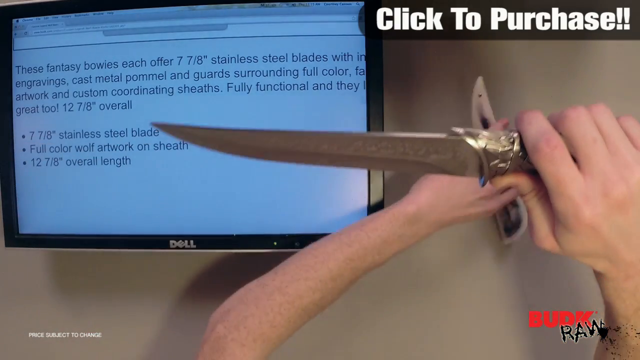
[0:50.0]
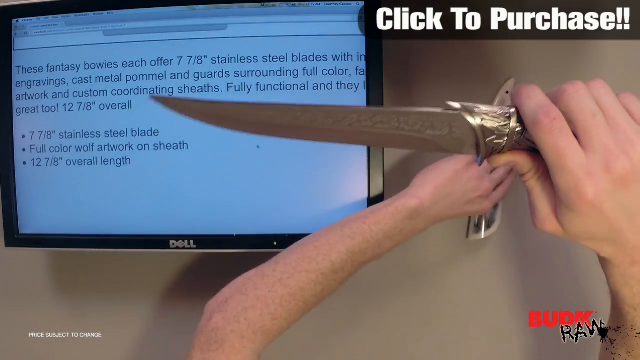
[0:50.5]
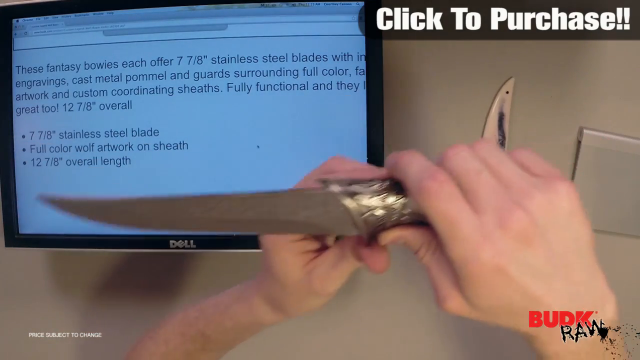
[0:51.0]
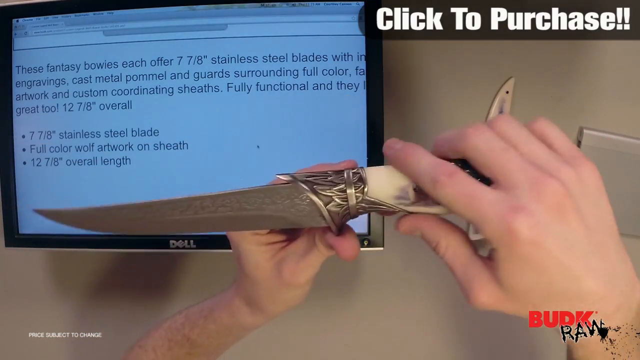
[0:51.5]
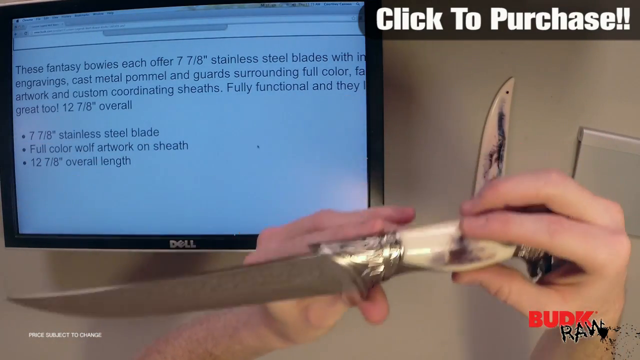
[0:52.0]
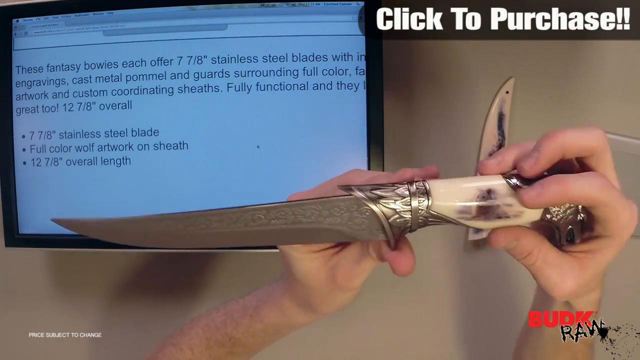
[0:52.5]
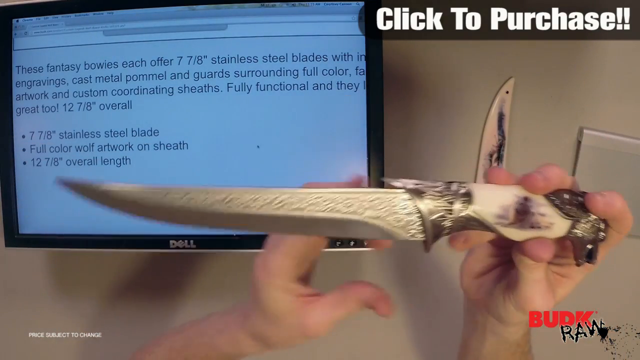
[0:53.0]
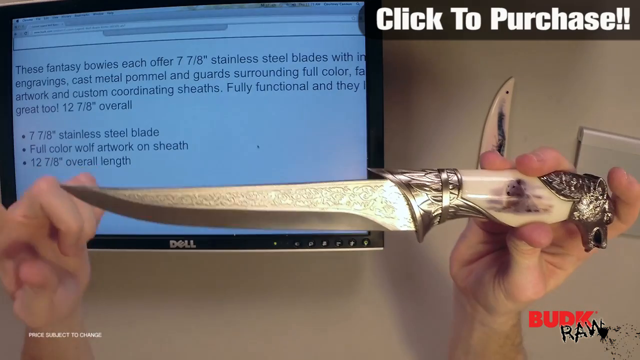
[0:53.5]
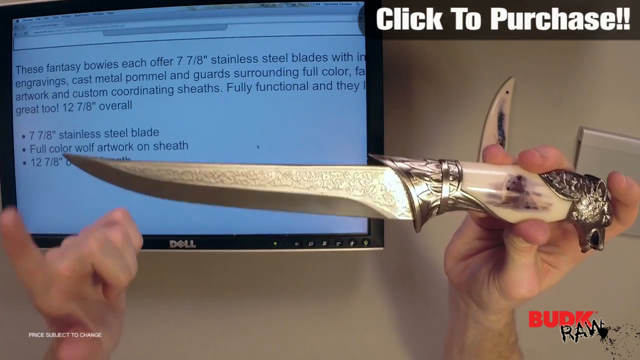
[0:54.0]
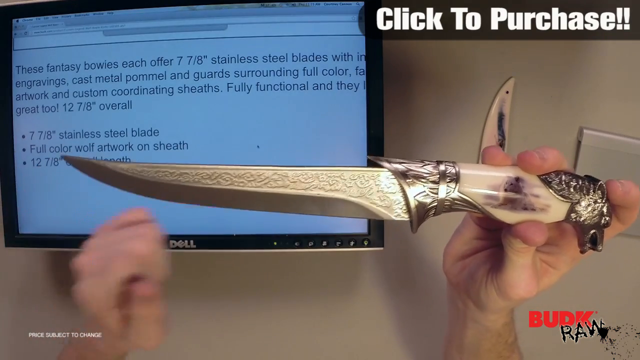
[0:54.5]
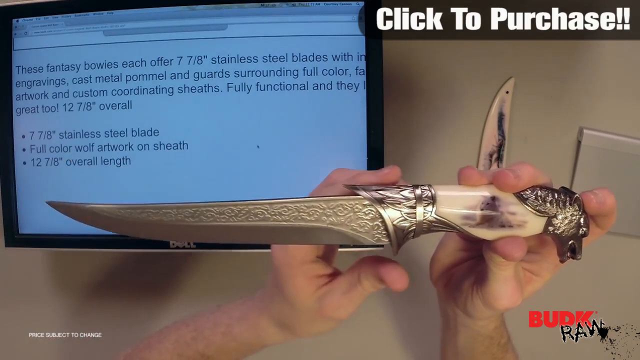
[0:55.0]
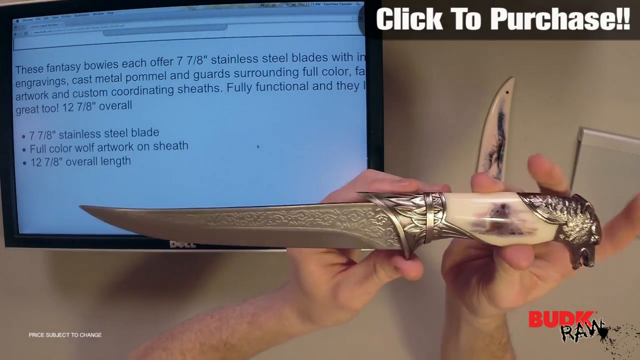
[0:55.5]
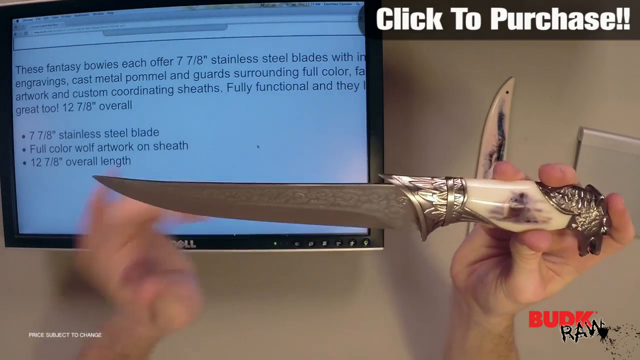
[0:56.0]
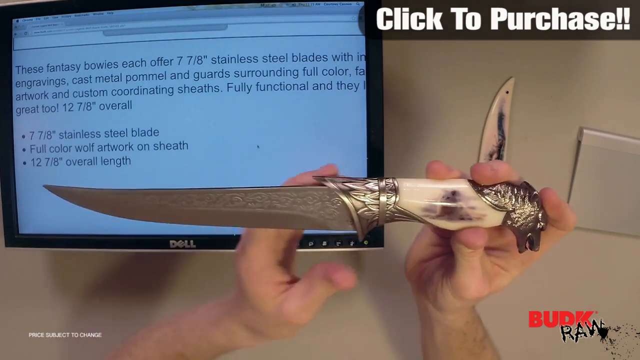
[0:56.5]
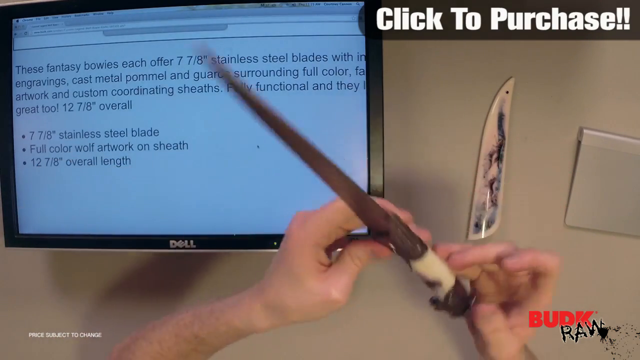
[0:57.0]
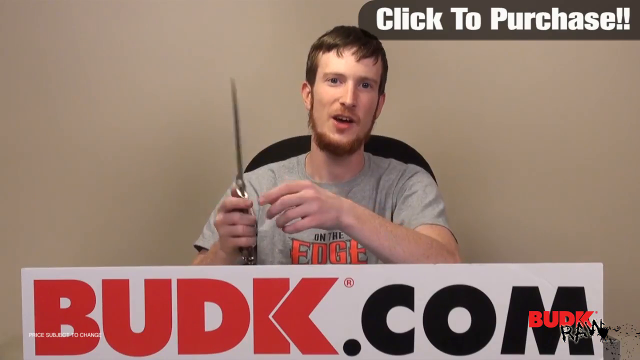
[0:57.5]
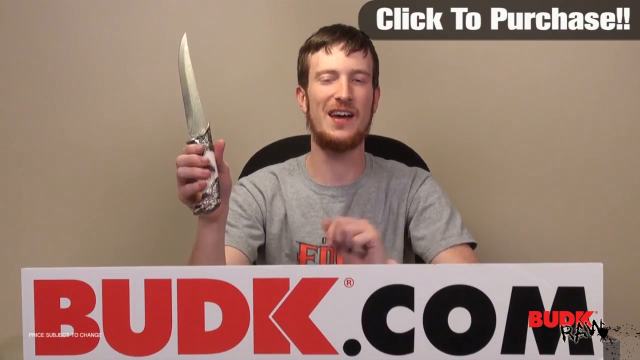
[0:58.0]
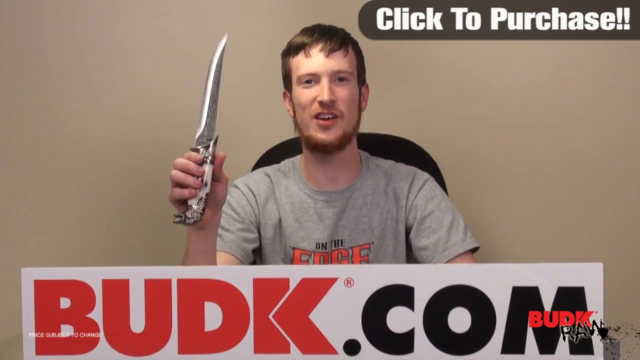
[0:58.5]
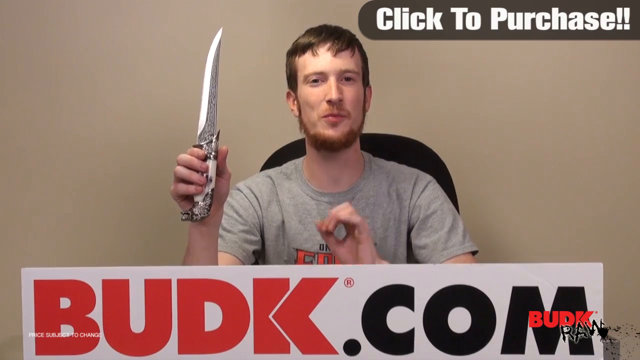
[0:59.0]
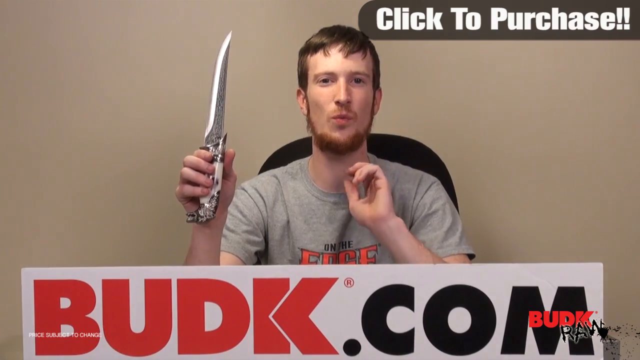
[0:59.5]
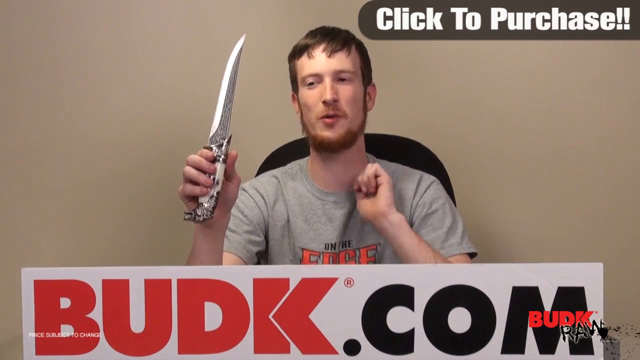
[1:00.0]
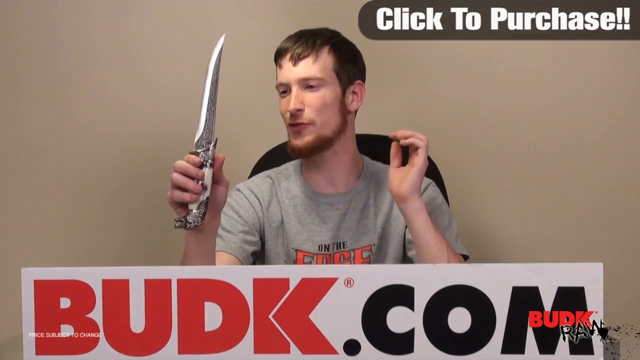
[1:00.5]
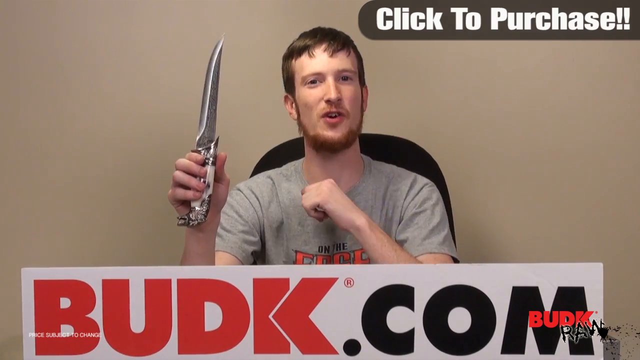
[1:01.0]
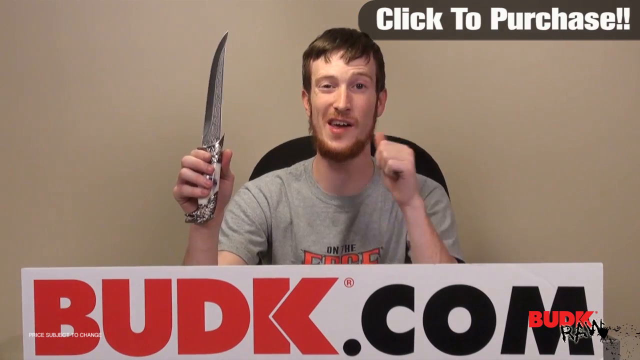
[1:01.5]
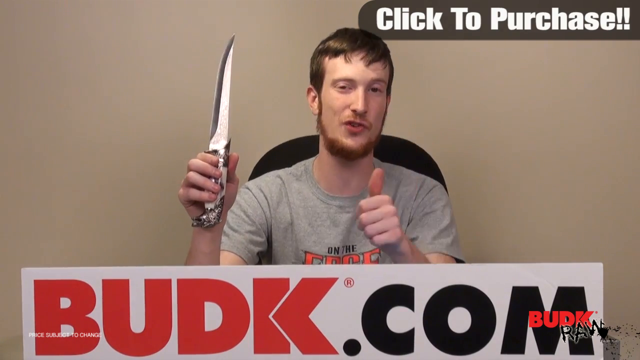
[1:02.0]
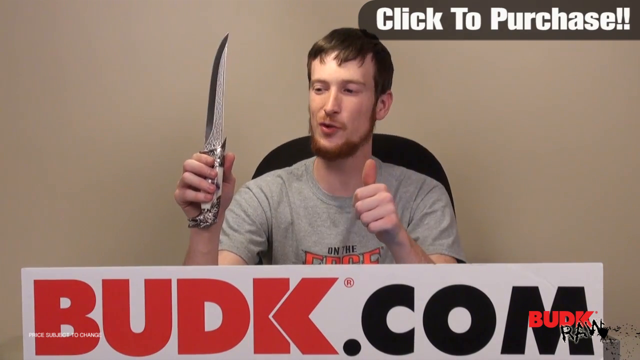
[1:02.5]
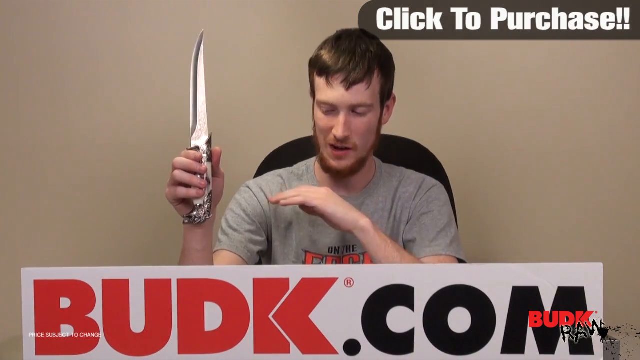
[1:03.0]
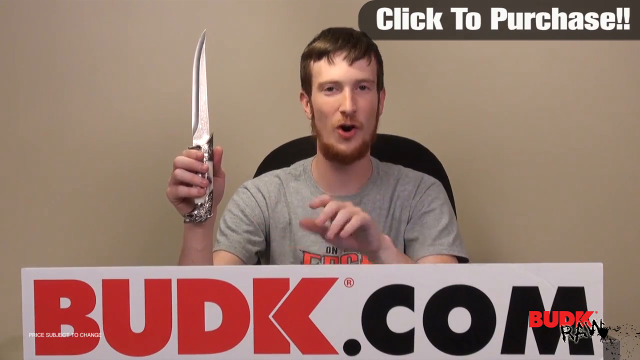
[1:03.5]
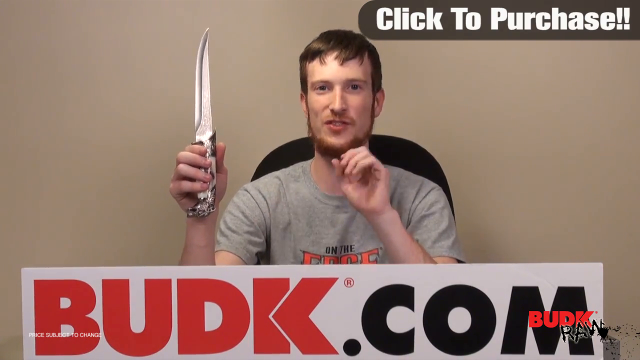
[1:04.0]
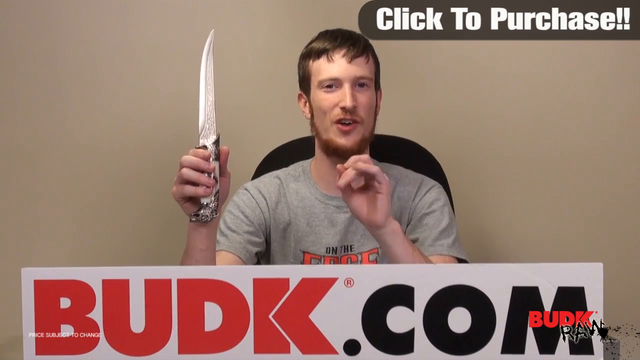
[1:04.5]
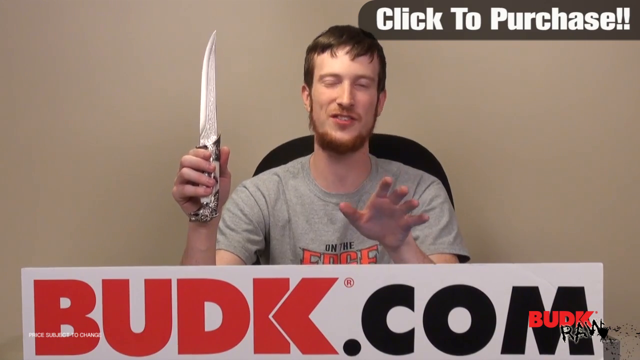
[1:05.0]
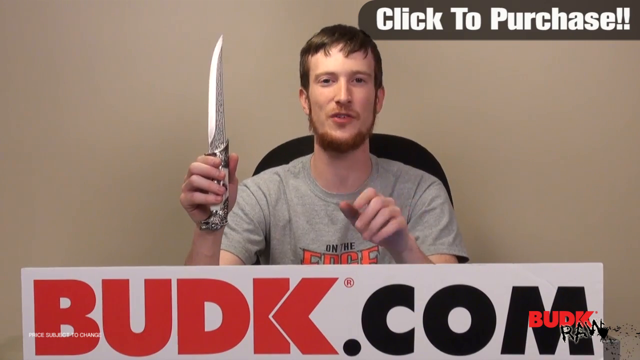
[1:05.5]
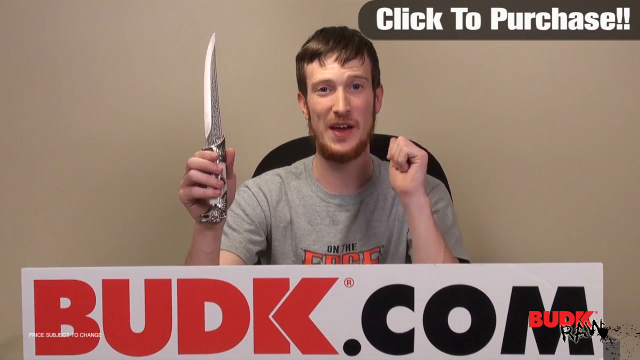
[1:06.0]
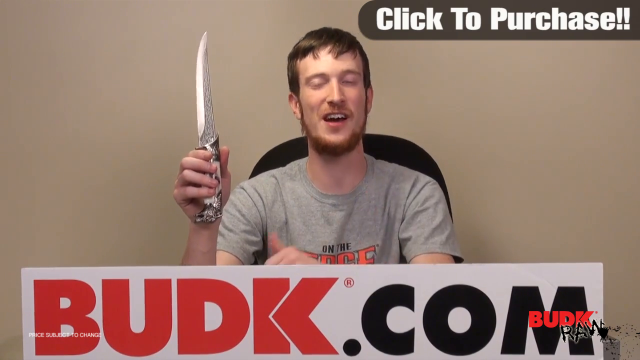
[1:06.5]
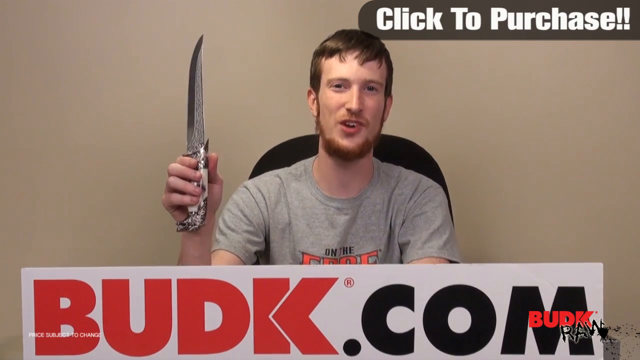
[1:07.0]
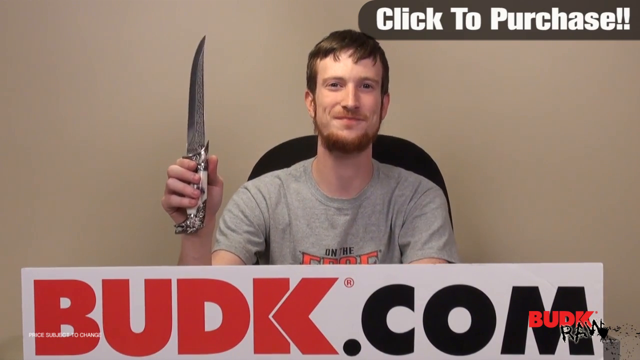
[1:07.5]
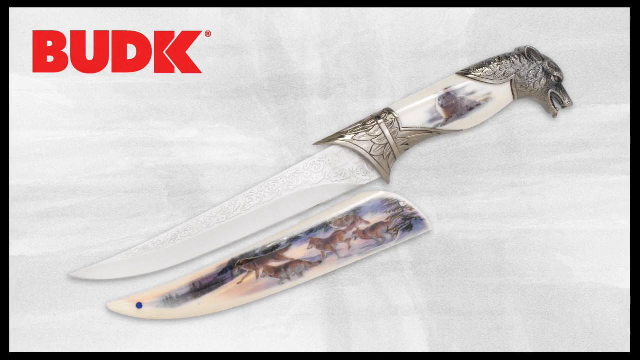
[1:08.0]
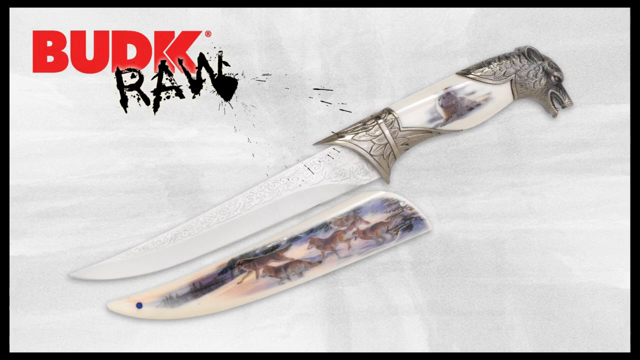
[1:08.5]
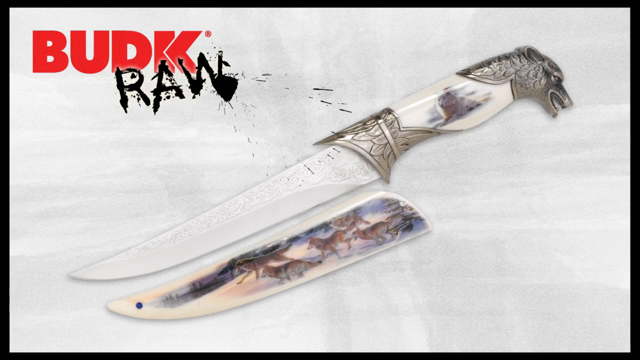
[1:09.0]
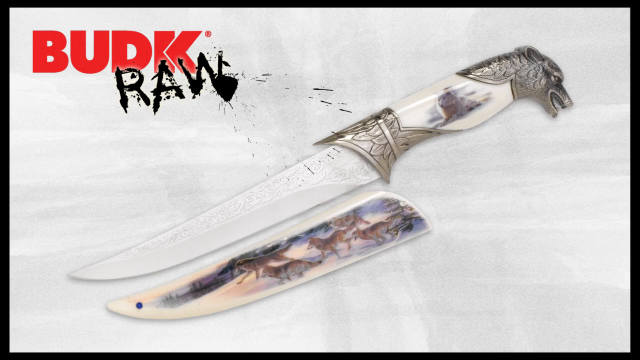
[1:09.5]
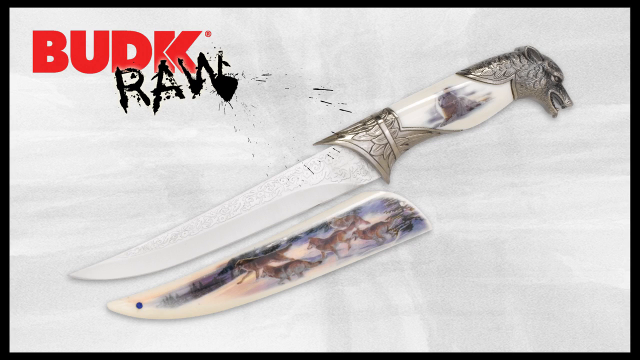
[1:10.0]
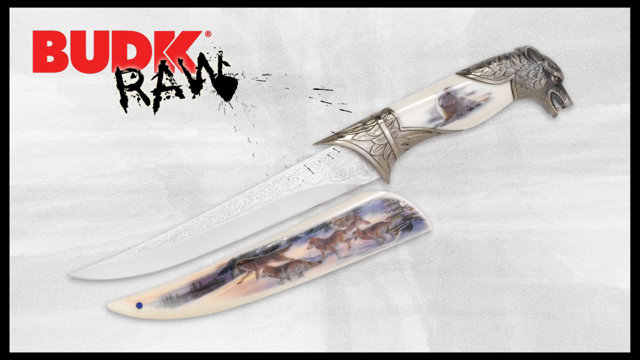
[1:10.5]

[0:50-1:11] The man is in the shot, still explaining the knife. He wears a grey round-neck shirt. On-screen text shows "budk.com" and "click to purchase."